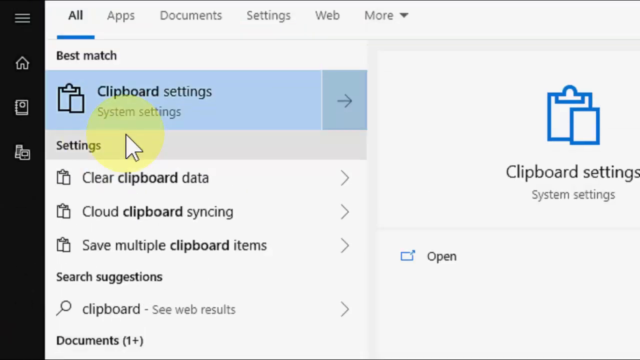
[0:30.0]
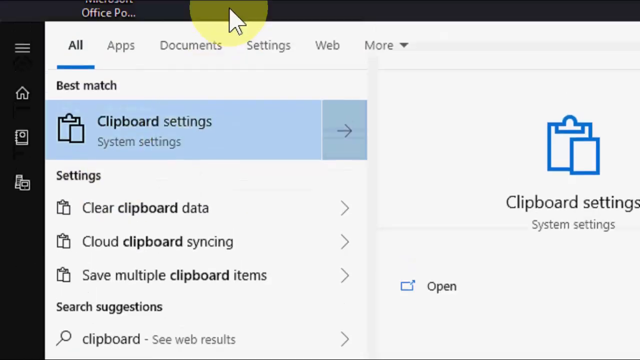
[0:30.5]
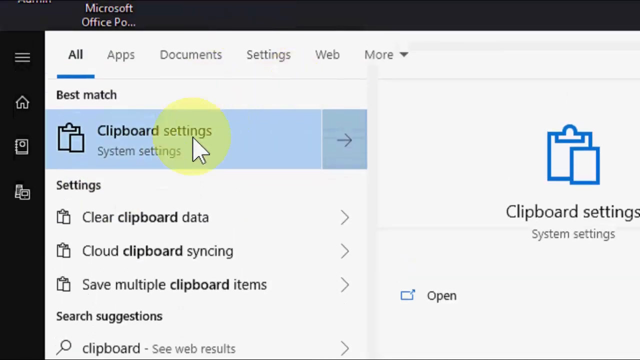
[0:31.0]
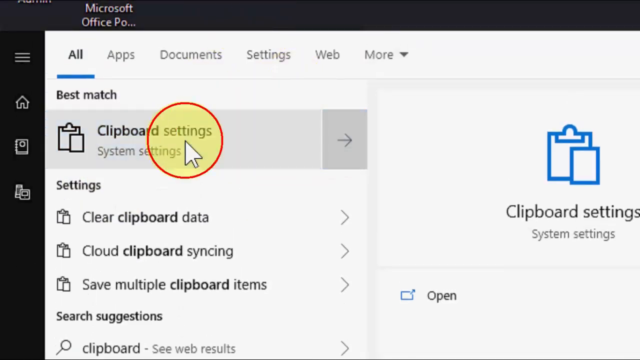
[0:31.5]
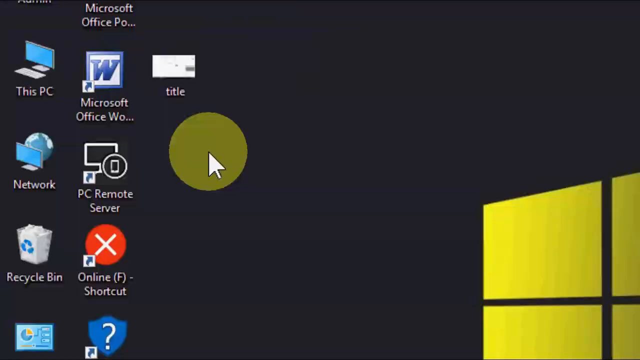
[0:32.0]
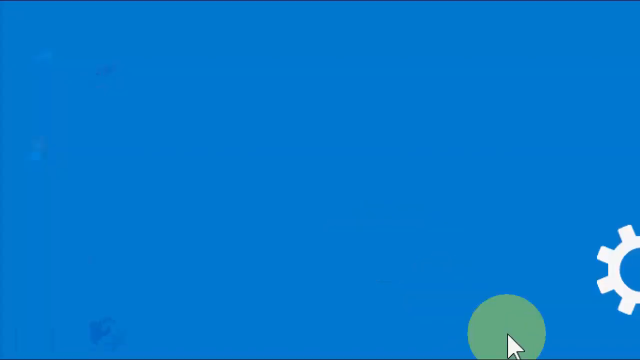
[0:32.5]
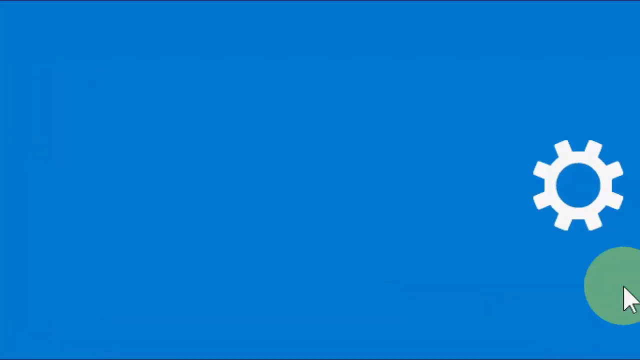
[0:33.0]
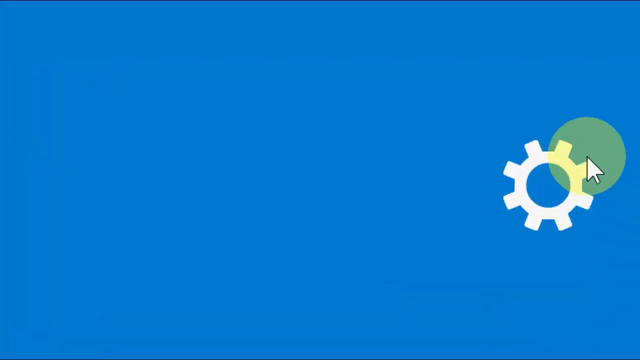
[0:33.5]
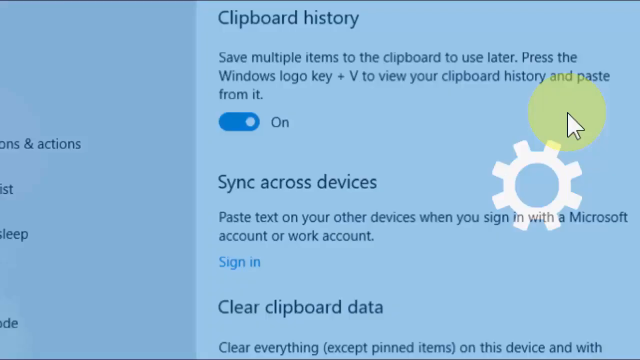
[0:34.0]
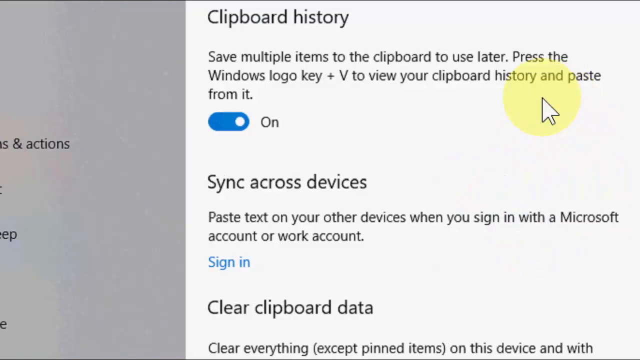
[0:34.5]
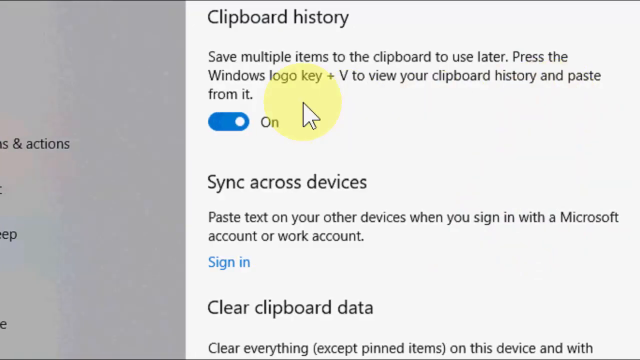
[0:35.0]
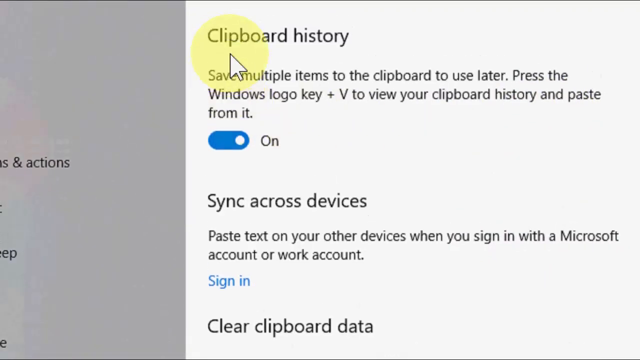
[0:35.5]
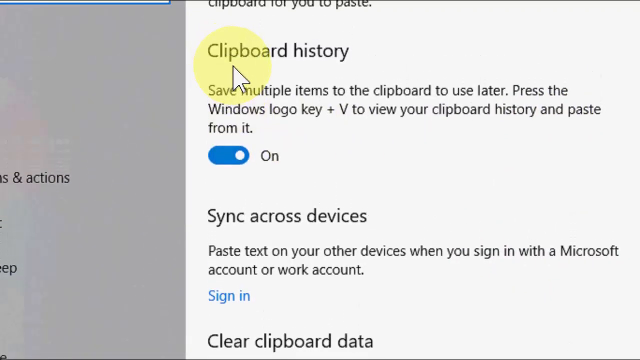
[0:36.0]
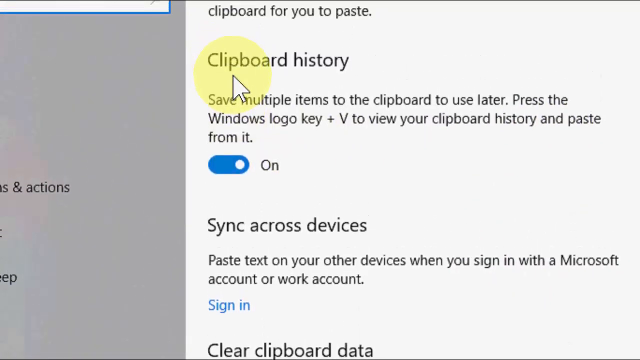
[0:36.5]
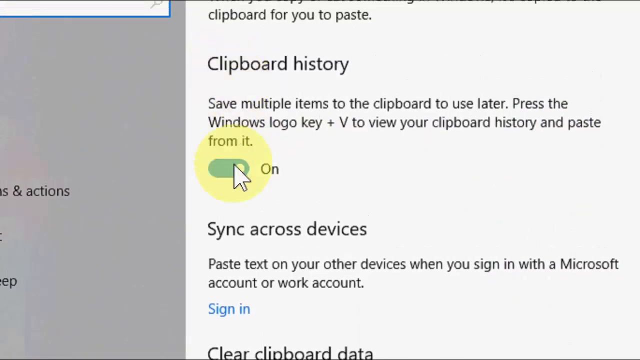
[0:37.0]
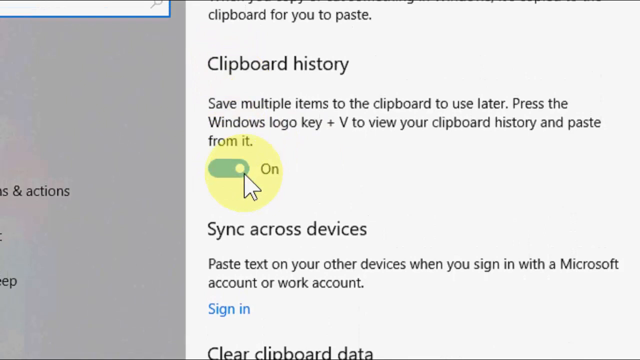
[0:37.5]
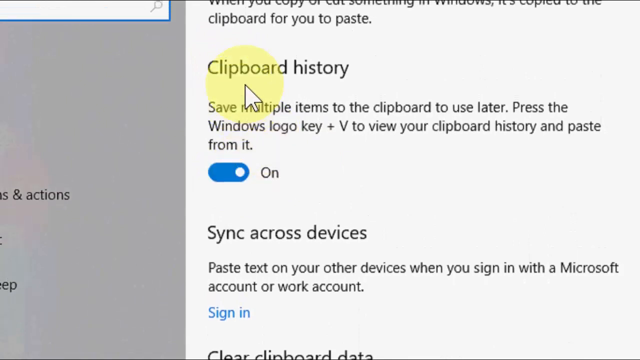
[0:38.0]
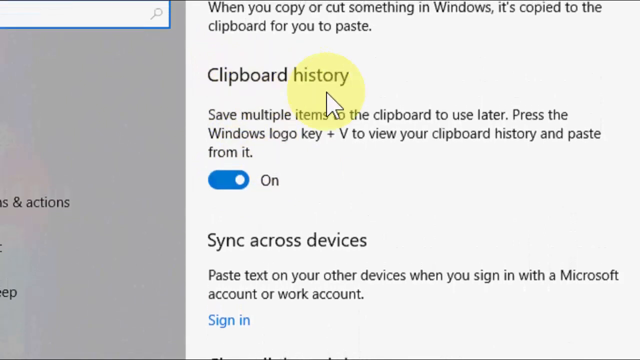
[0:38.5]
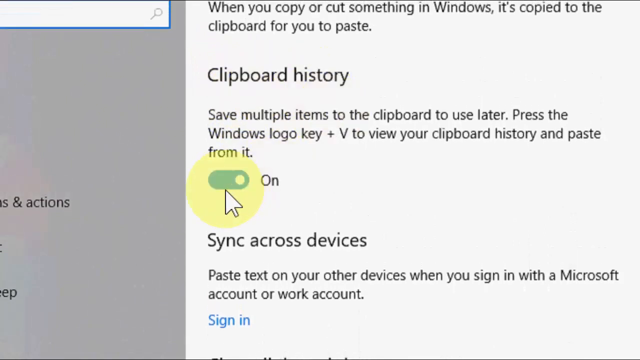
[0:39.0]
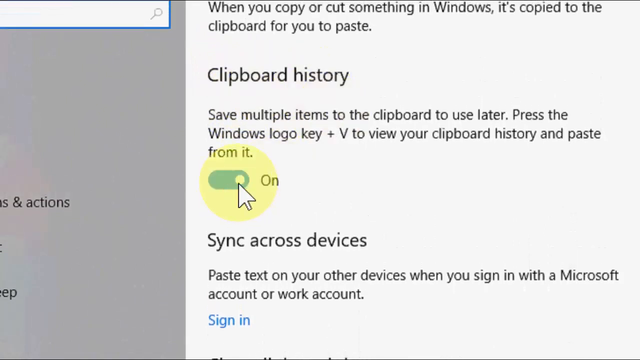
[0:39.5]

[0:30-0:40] The person controlling the computer clicks into the clipboard settings, and a transition shows a blue screen with a white cogwheel before the clipboard history setting opens. Under clipboard history it says "save multiple items to the clipboard to use later press the windows logo key plus b to view your clipboard history and paste from it", and that setting is on. The cursor then hovers over the on position of that setting. There are no physical subjects in this part of the video.